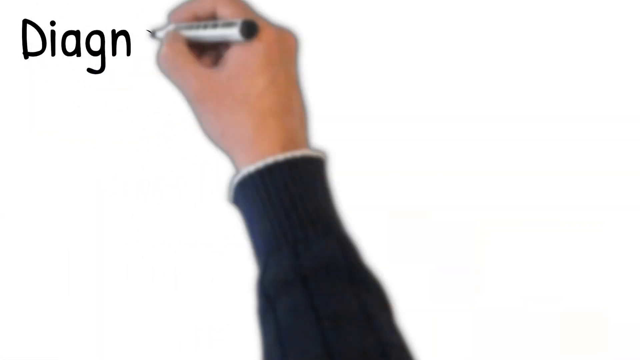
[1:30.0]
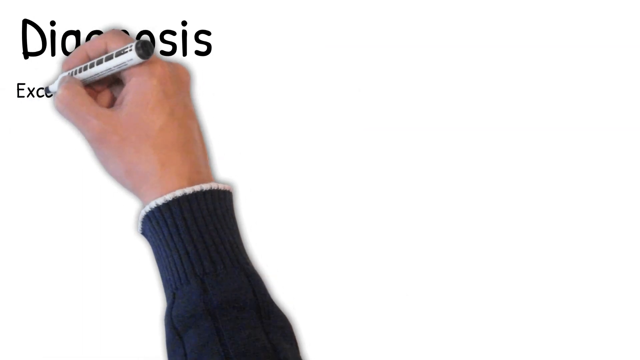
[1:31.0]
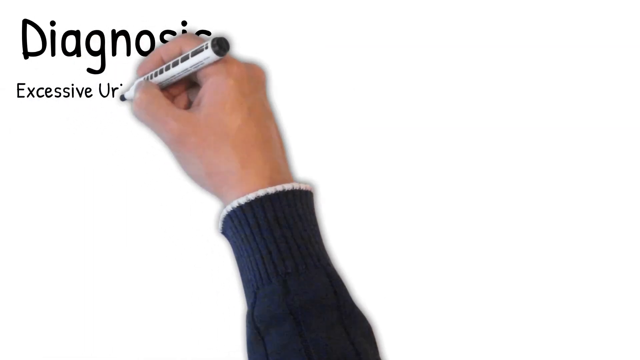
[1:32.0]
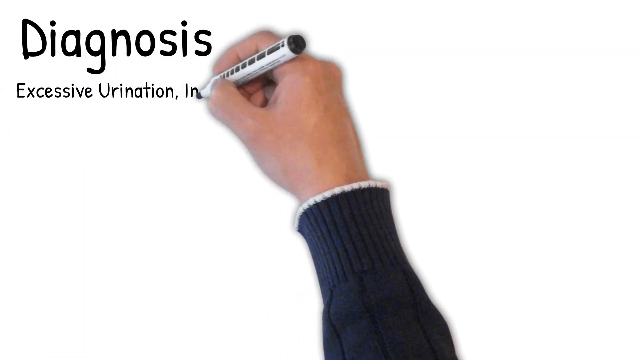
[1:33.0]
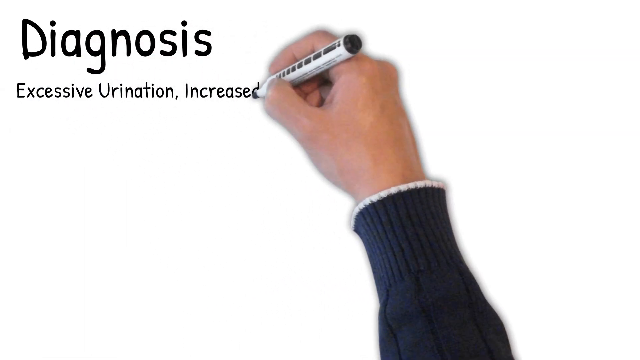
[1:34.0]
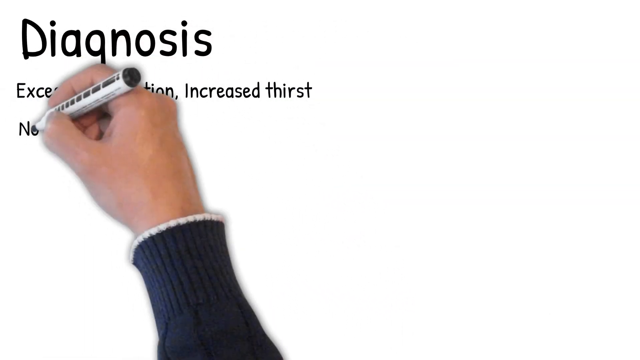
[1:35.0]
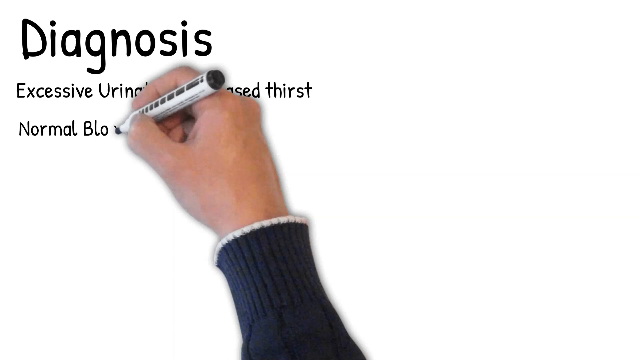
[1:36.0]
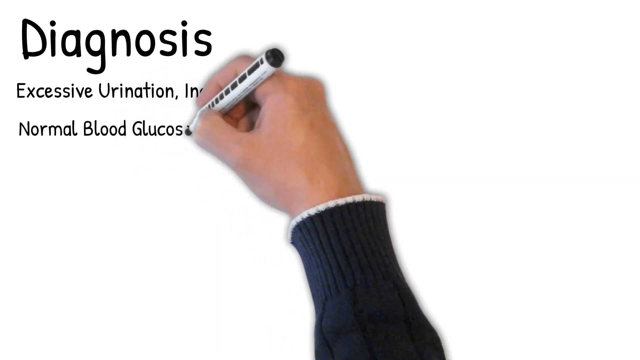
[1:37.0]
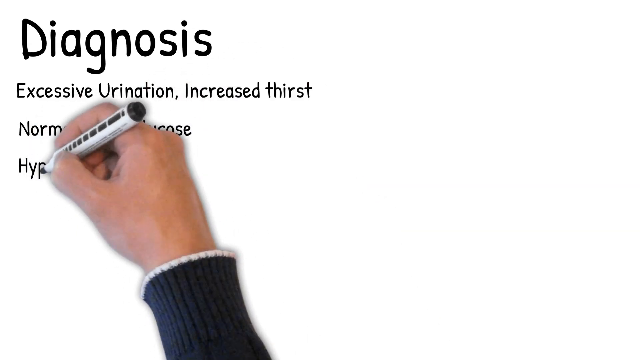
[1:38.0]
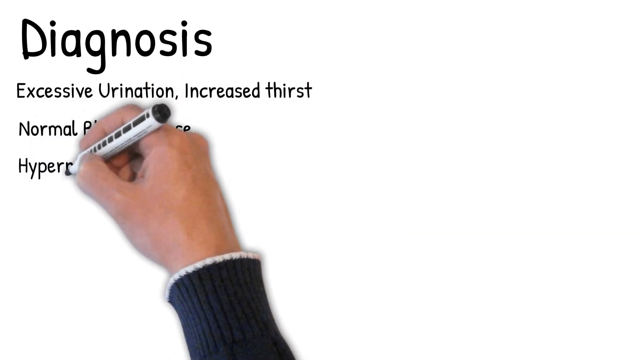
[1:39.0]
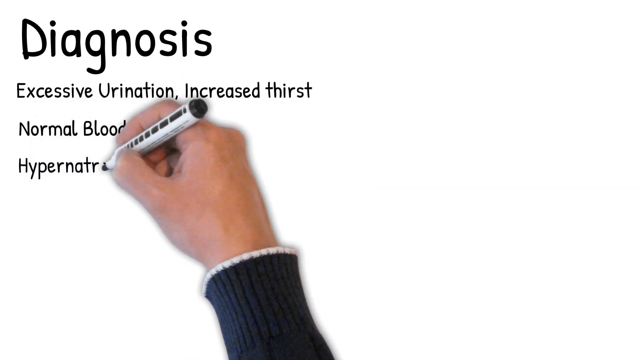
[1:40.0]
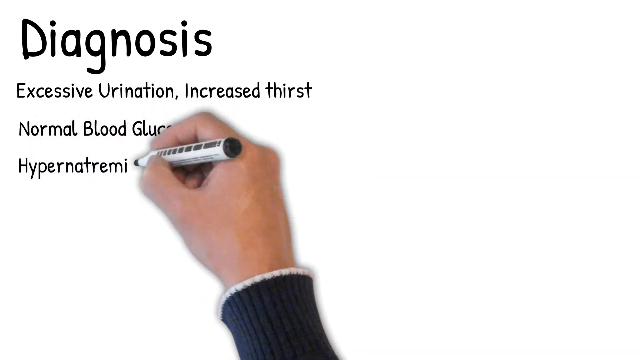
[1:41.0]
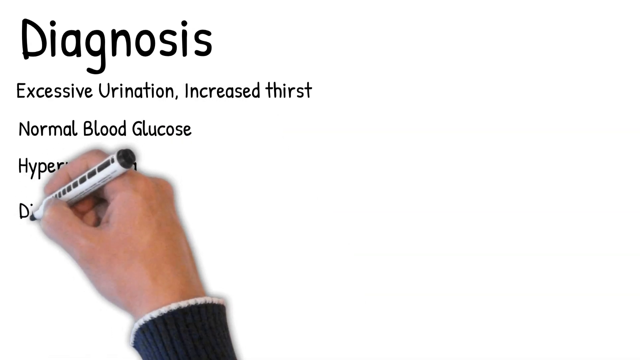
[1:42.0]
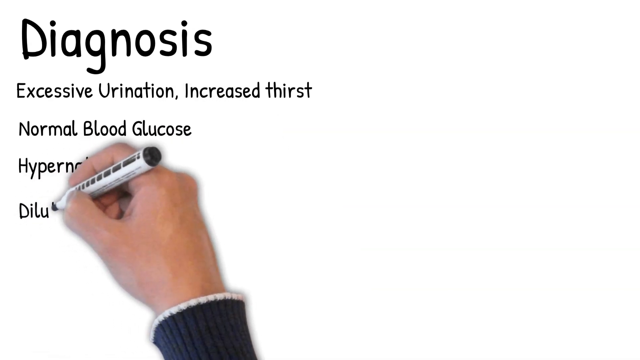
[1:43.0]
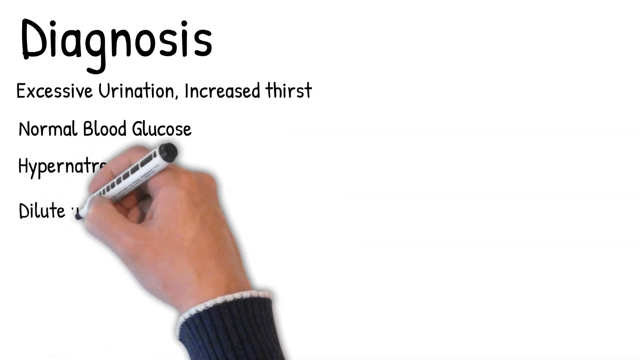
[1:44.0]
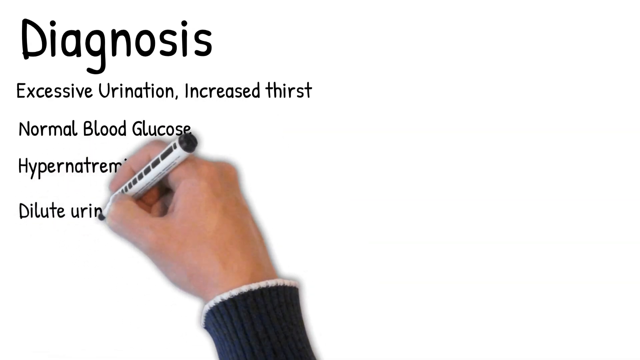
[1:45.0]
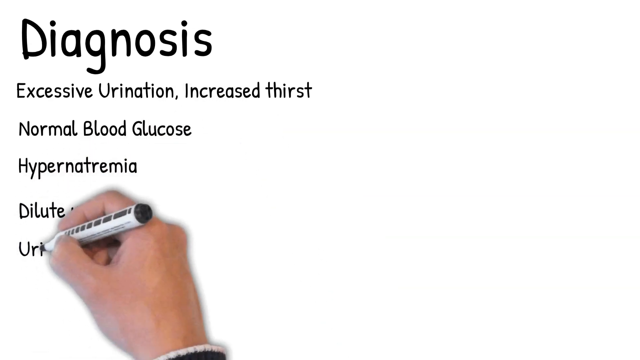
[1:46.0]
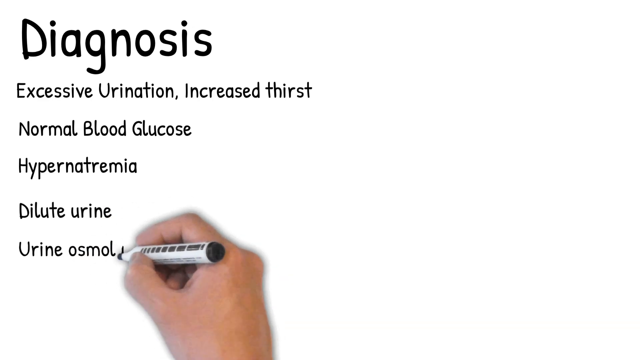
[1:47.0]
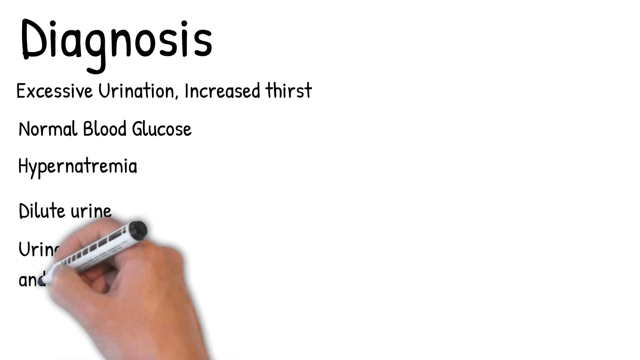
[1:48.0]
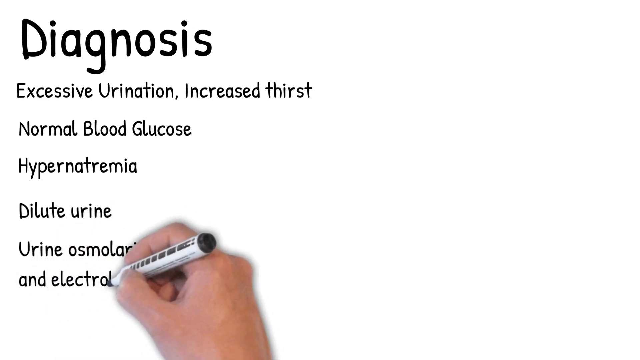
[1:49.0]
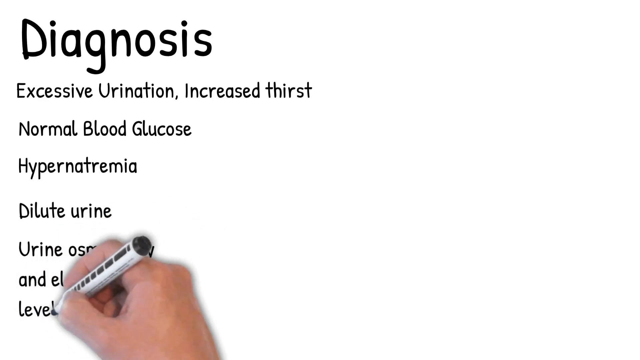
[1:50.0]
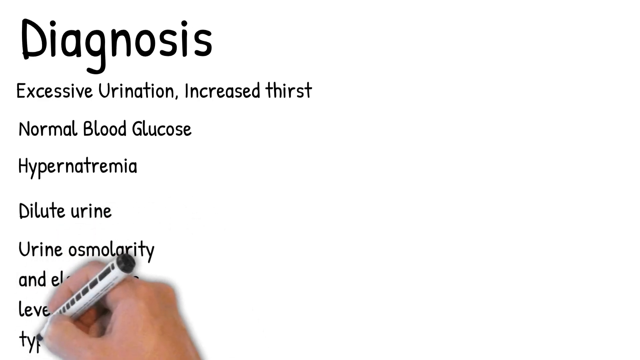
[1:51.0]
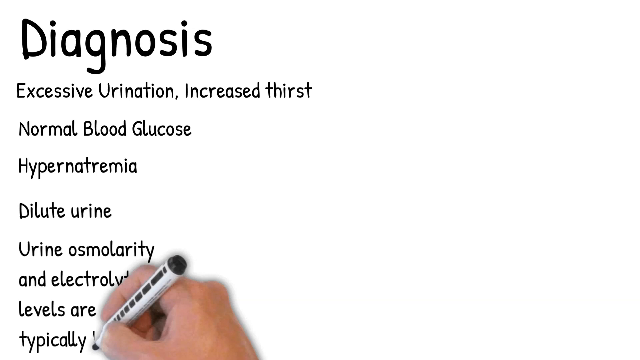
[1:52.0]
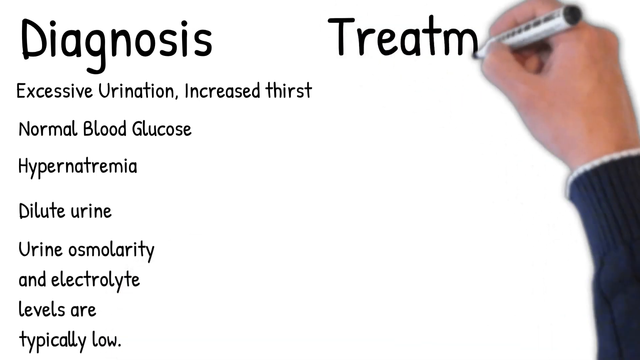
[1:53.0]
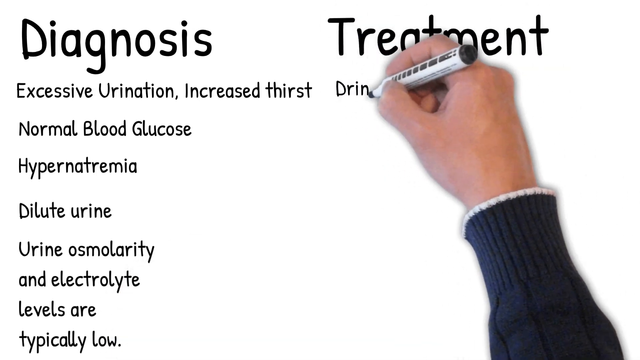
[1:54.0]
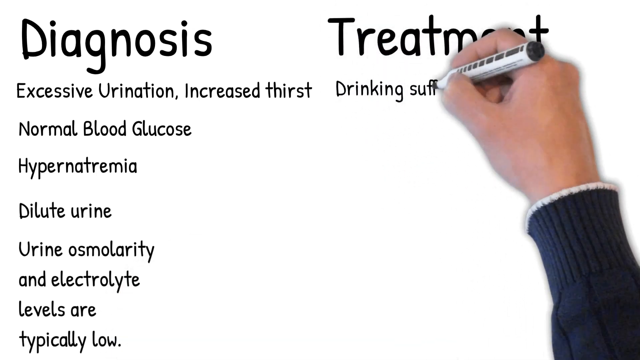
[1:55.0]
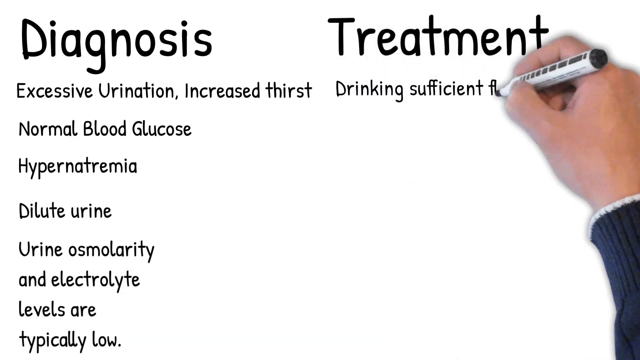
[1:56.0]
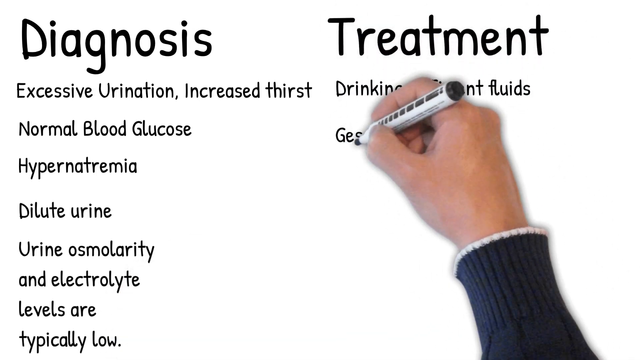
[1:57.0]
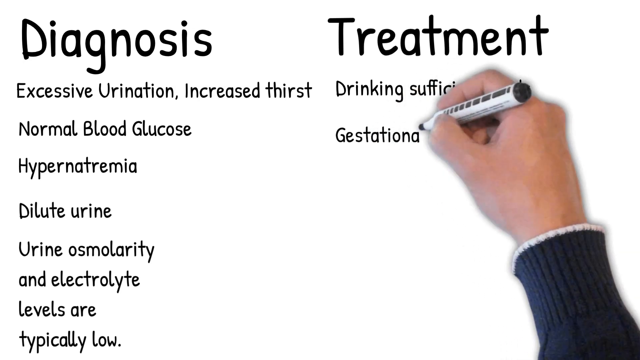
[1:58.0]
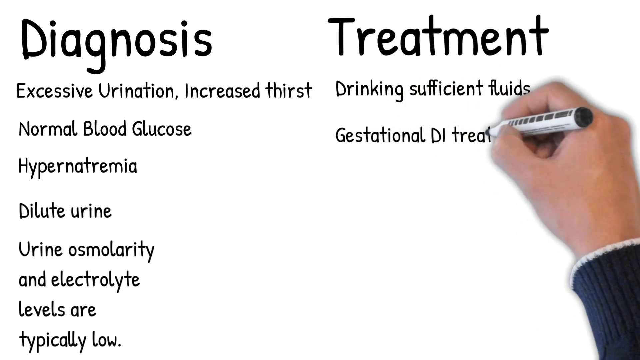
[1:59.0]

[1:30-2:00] The man writes a diagnosis on the screen: "excessive urination, increased thirst, normal blood glucose, hypernatremia, dilute urine, urine osmolarity, and electrolyte levels are typically low." On the right-hand side he starts a list for treatment reading "drinking sufficient fluids, gestational DI treatment is." He writes quickly with a white and black pen with a black top, and everything written is in black. He appears to be writing on a whiteboard. The setting does not change; only the writing changes.